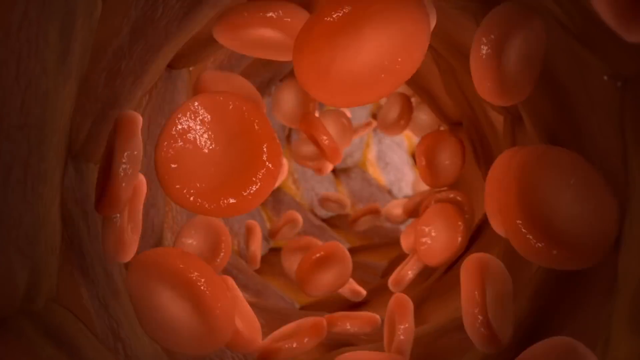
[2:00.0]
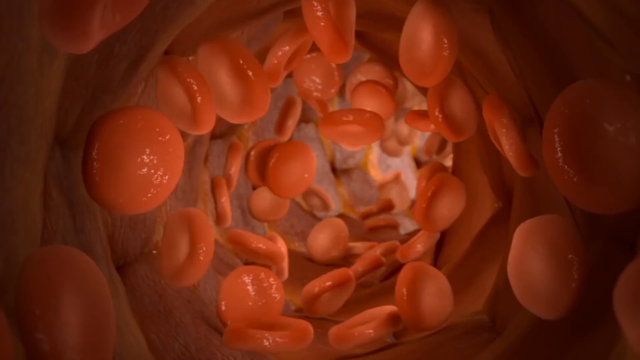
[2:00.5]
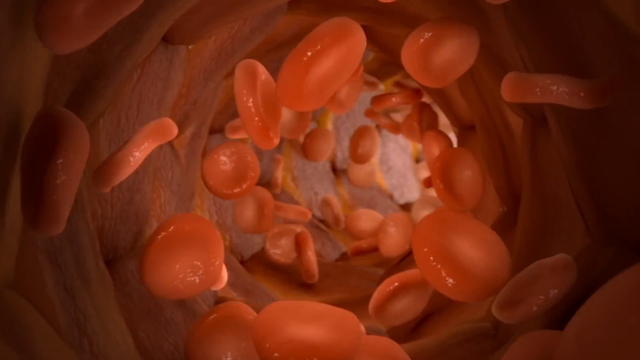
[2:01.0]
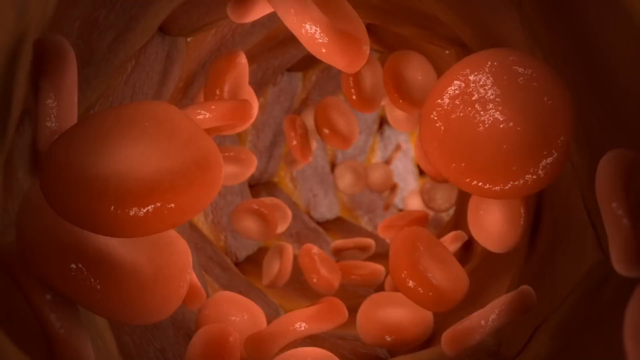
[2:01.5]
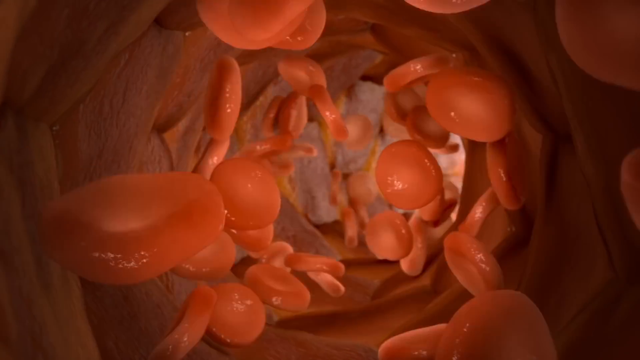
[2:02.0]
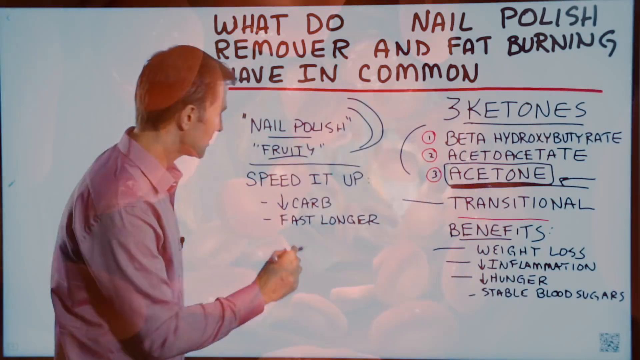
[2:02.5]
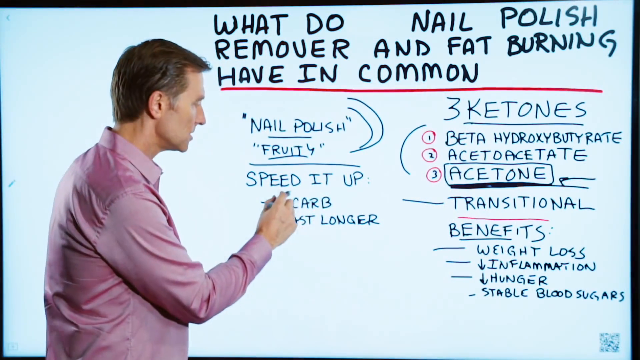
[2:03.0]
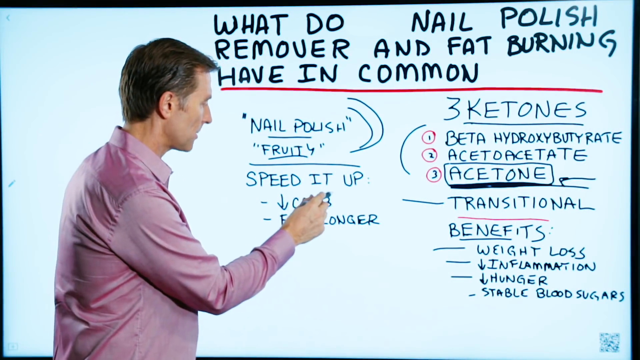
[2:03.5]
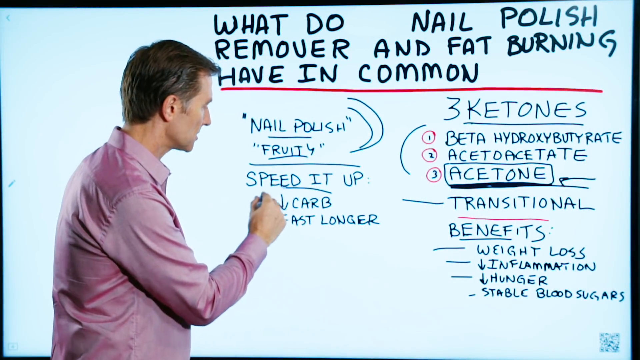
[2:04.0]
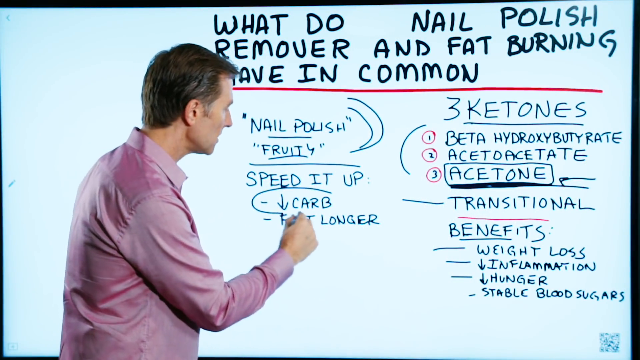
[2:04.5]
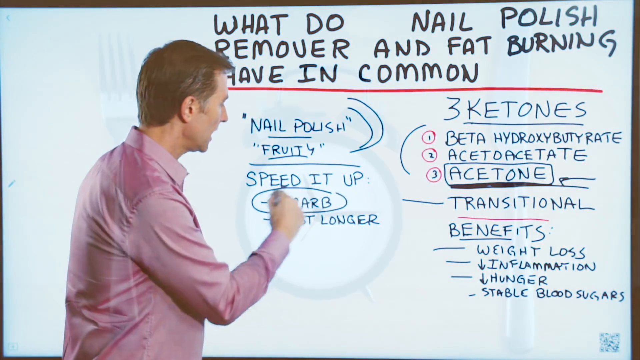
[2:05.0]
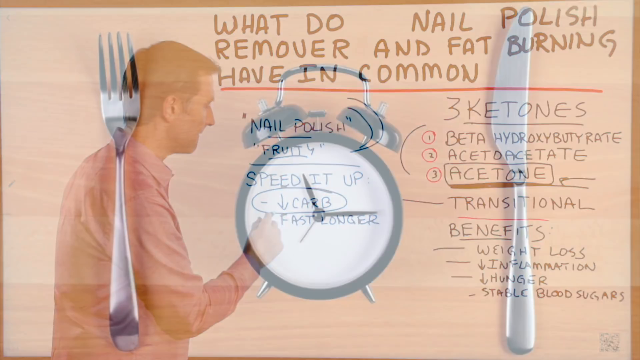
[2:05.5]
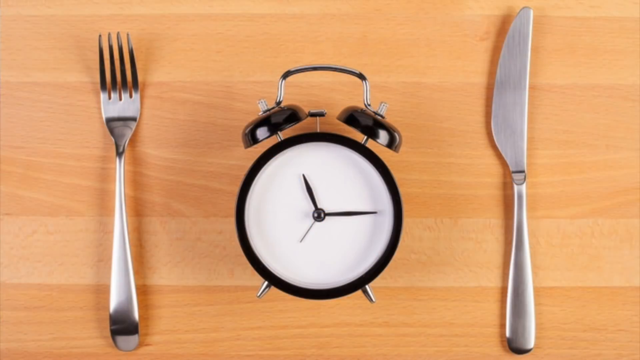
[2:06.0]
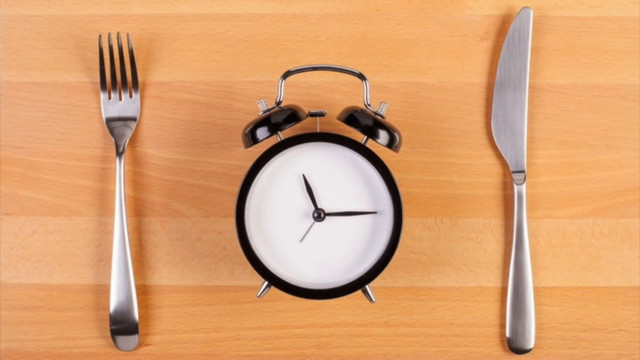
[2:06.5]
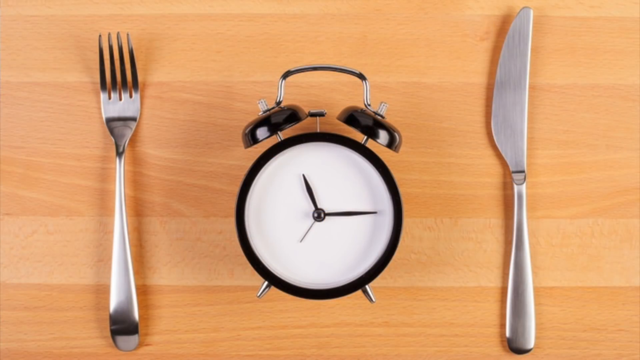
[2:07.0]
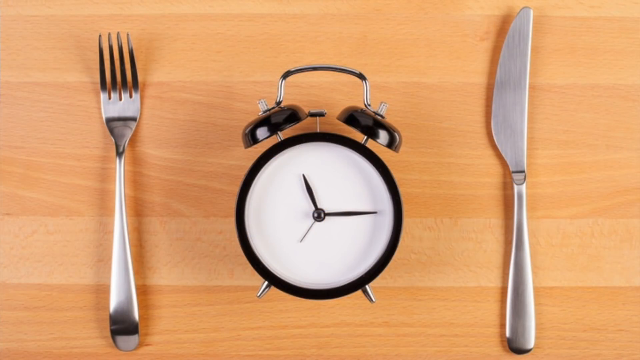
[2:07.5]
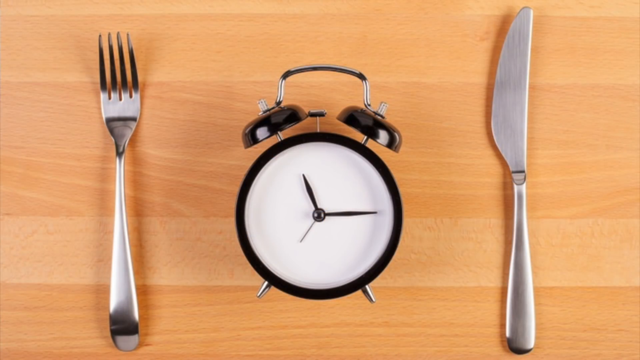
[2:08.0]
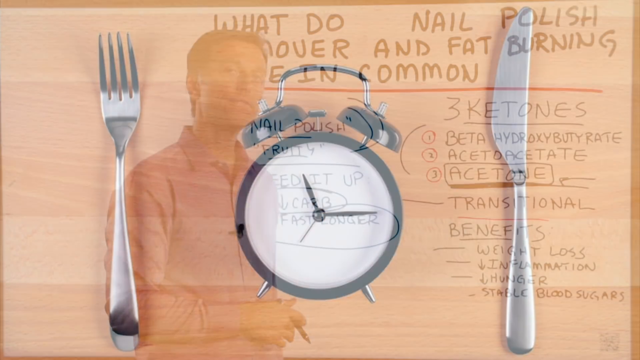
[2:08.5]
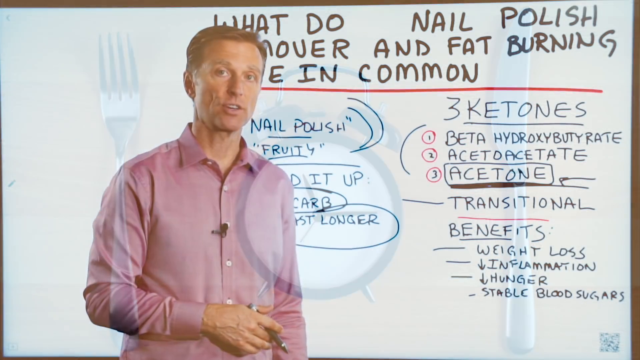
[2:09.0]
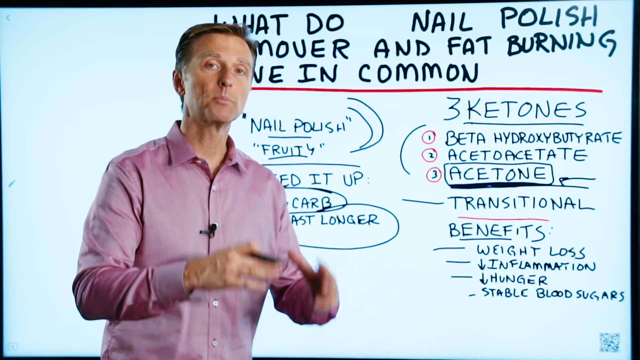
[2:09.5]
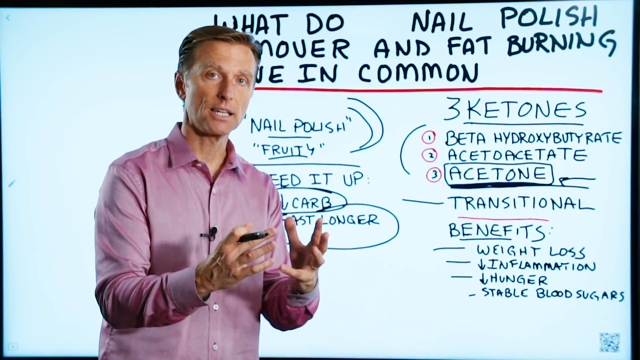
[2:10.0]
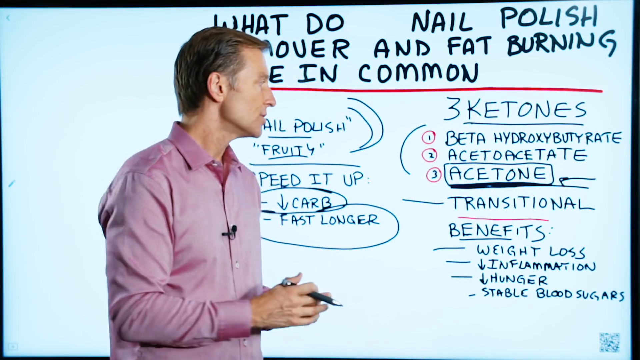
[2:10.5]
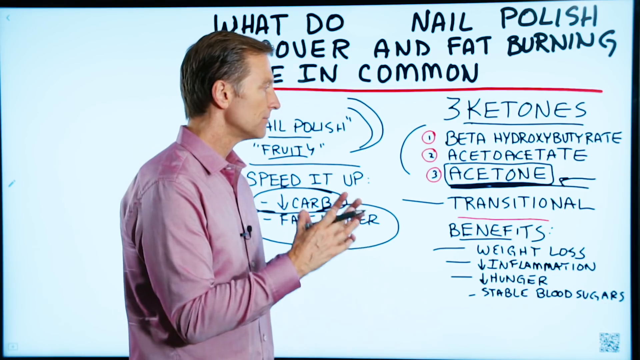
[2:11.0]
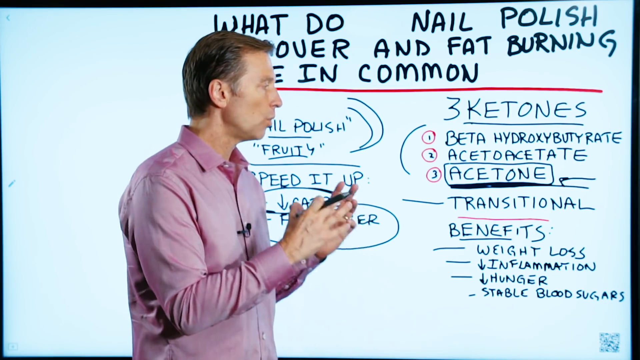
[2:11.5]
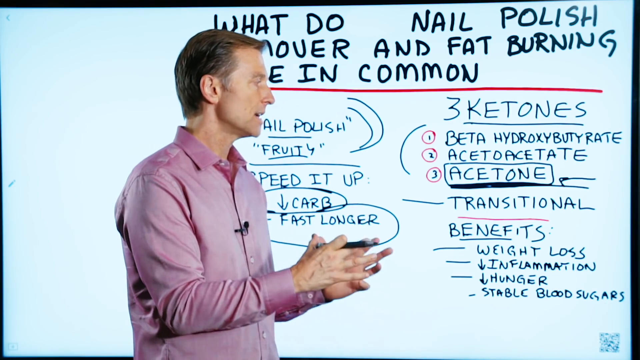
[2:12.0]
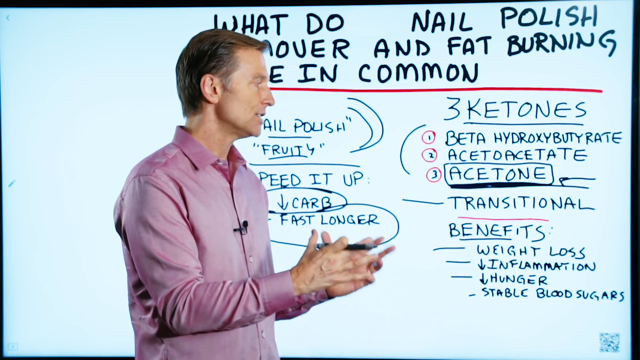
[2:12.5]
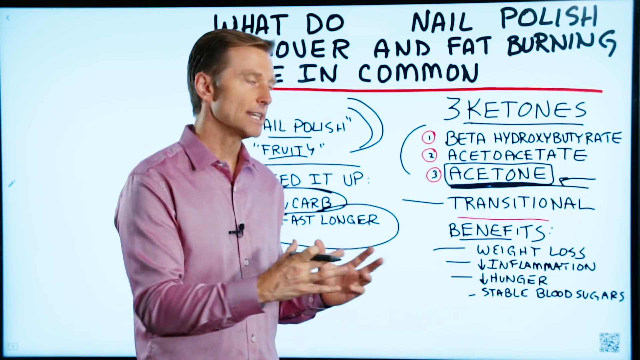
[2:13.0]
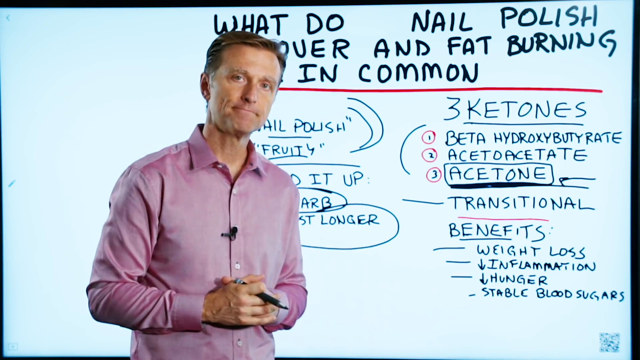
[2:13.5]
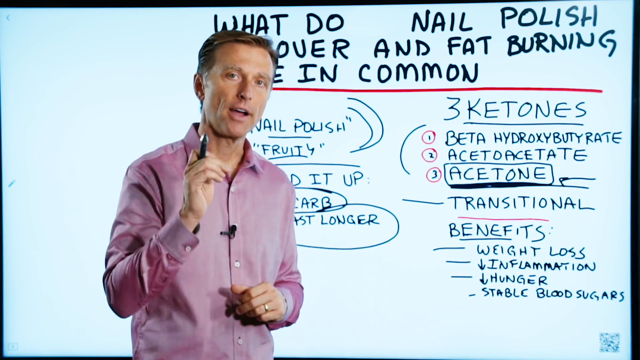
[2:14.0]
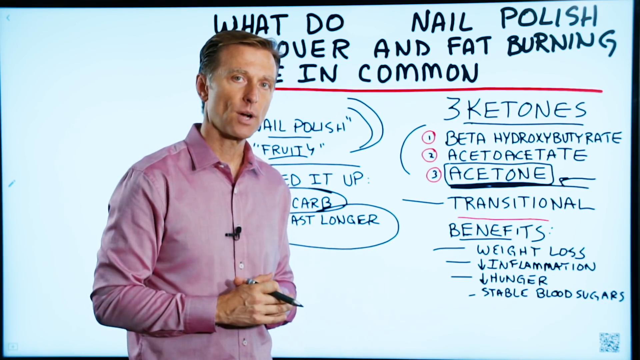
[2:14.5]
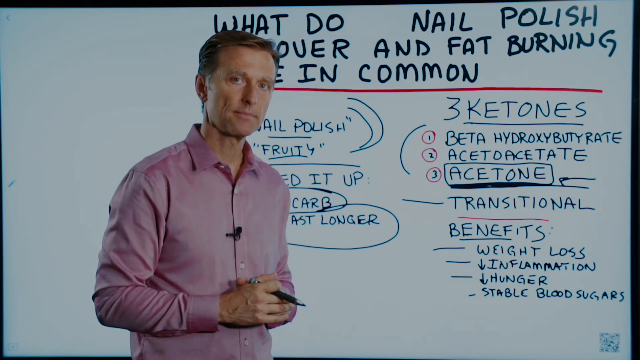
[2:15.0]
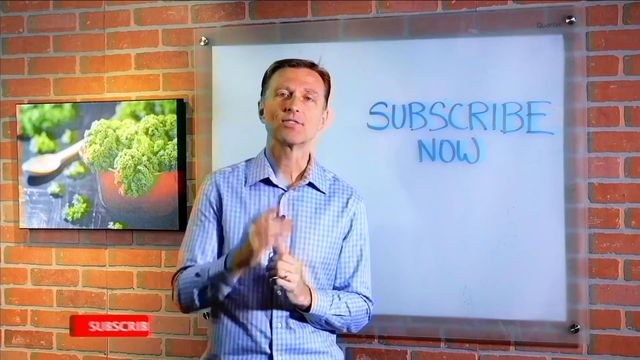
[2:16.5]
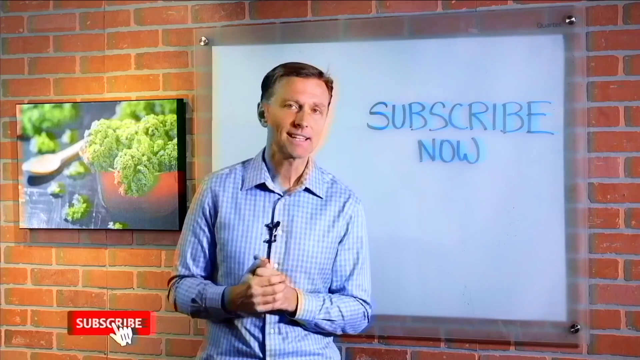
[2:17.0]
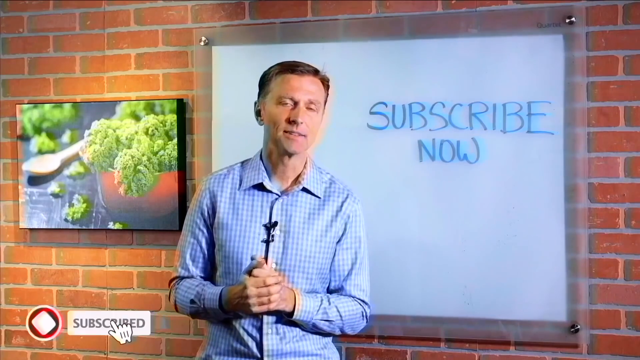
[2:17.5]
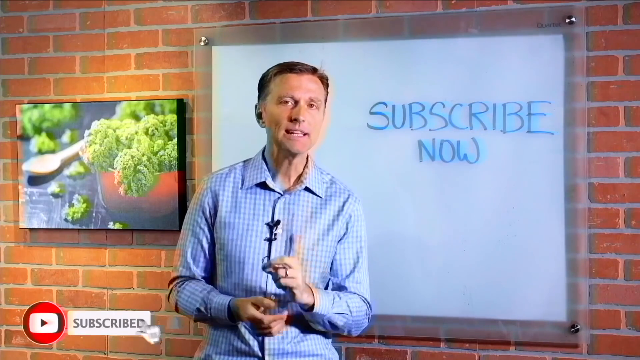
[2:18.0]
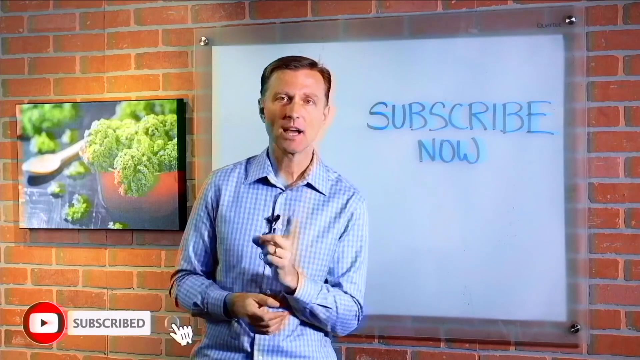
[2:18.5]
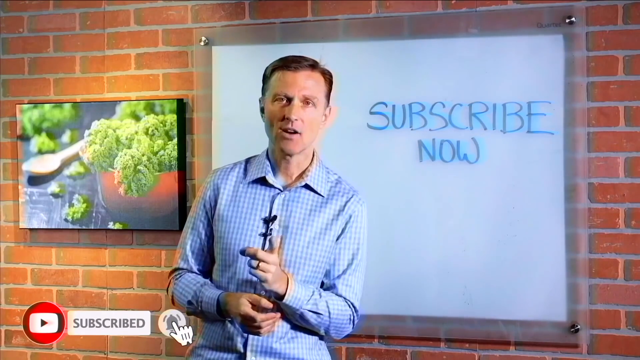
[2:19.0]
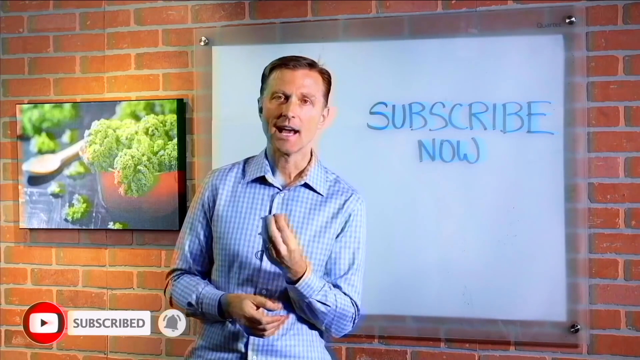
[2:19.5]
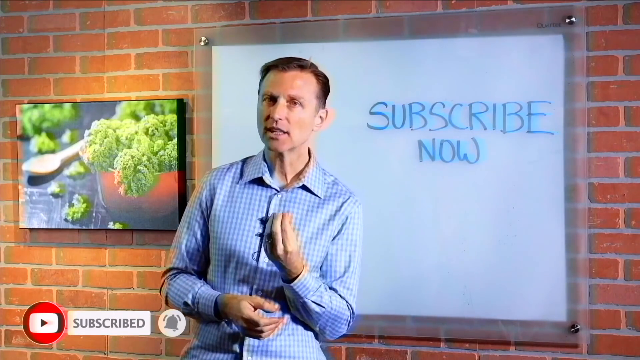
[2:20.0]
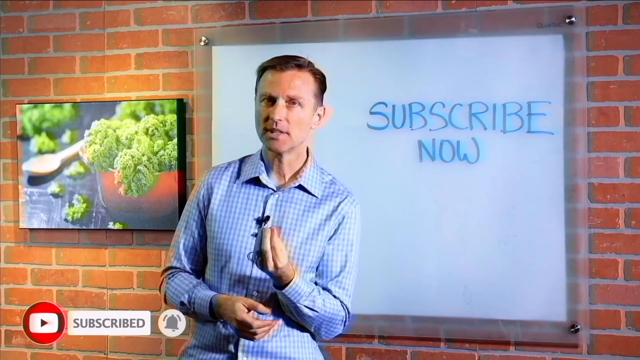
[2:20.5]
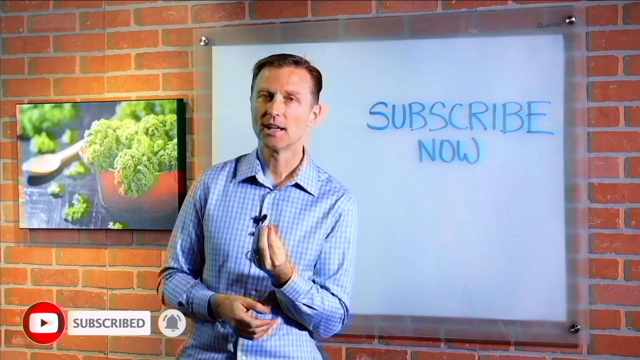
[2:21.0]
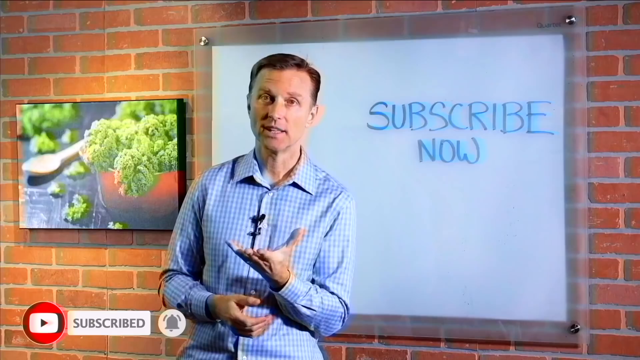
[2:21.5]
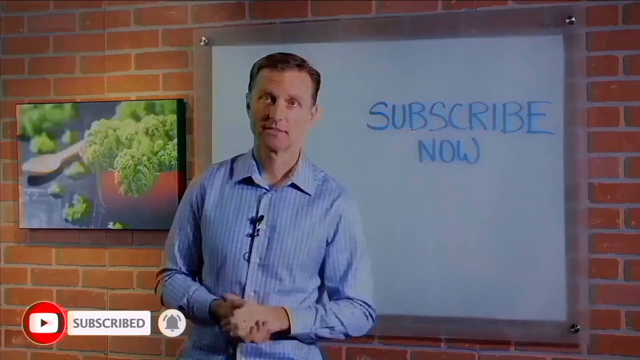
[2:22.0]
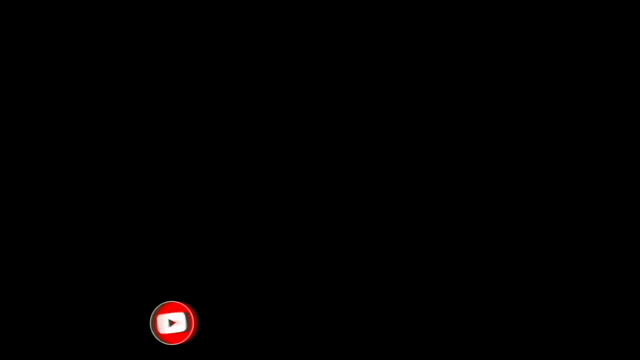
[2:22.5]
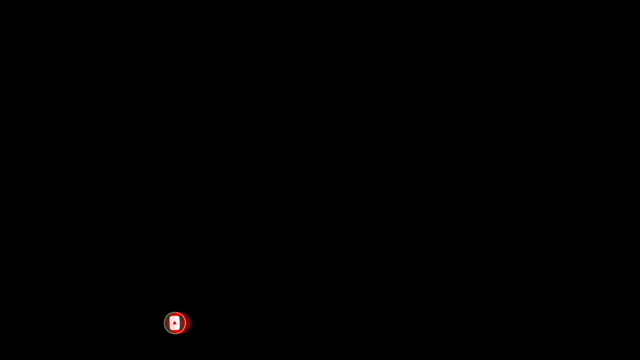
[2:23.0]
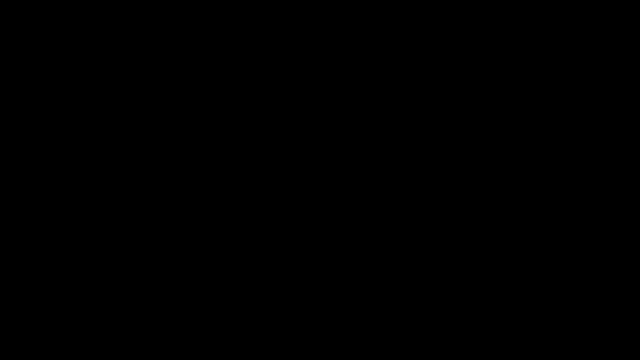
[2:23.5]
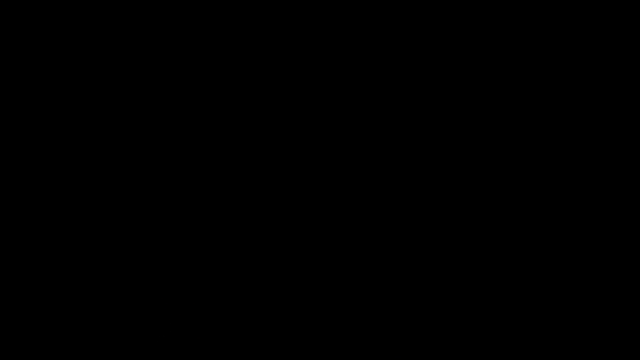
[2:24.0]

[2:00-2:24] Inside a hyper-realistic 3D render of a blood vessel, hundreds of blood cells of different sizes travel along the vessel walls. The video returns to the presenter, who is emphasizing carbs, then switches to a still image of a fork, an alarm clock and a metal knife on a wooden table. Back with the presenter, he addresses the camera, using both hands for emphasis and keeping his eyes focused on the viewer, until the screen fades to black. It fades back in on the presenter in a different setting and attire: a long-sleeved blue plaid shirt, against a fake brick wall, with another whiteboard-type surface that says "subscribe now". To the left of it is a fairly large picture of broccoli in a red bowl with a wooden spoon.